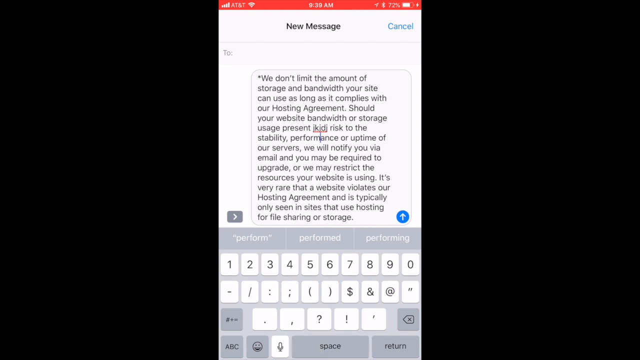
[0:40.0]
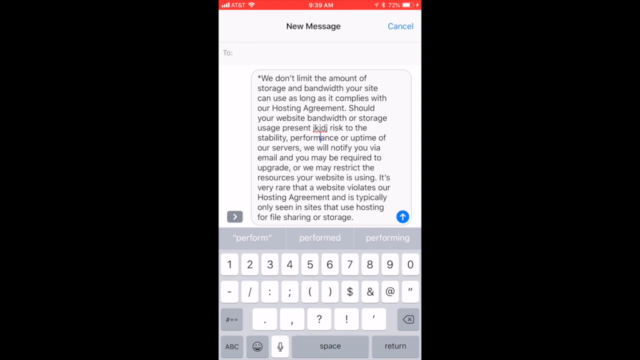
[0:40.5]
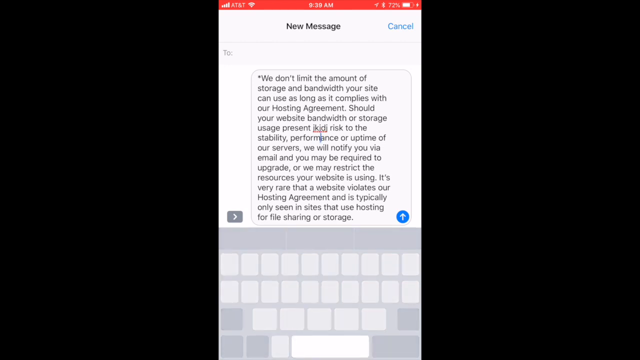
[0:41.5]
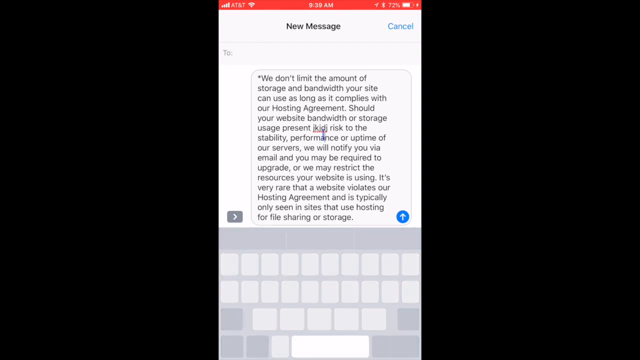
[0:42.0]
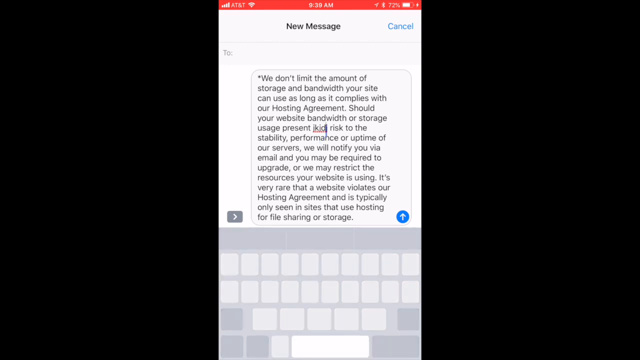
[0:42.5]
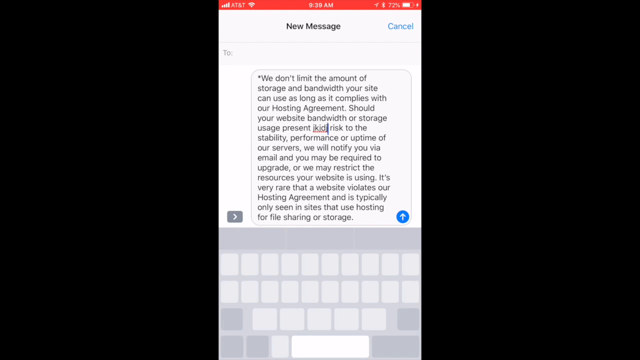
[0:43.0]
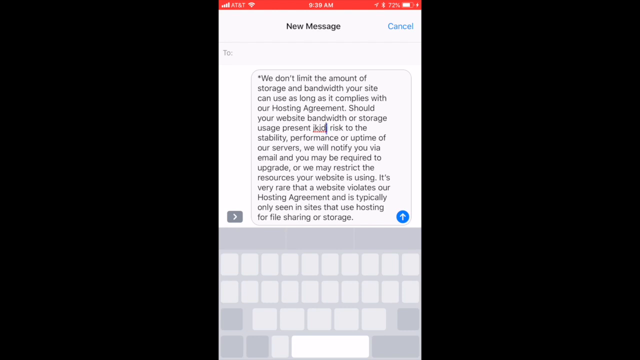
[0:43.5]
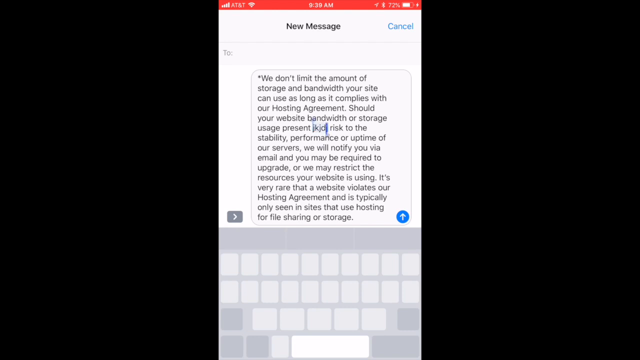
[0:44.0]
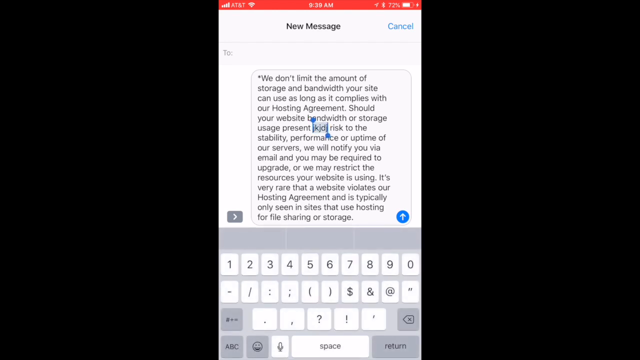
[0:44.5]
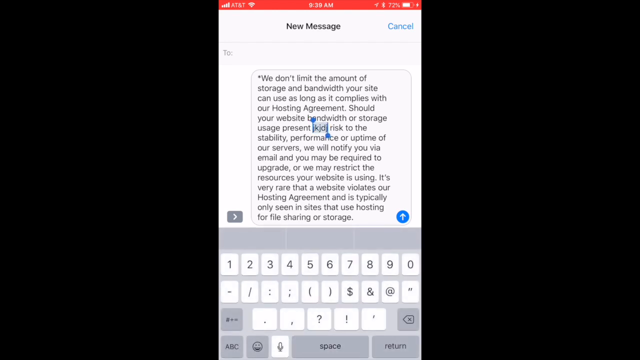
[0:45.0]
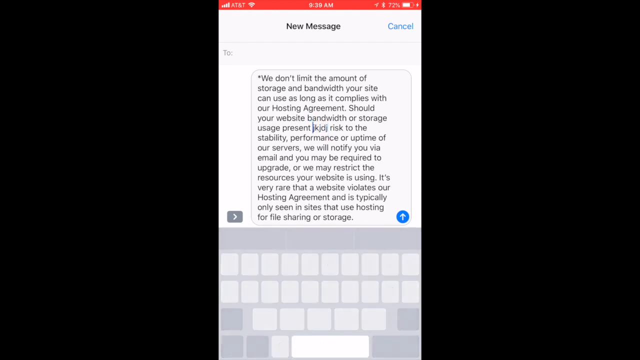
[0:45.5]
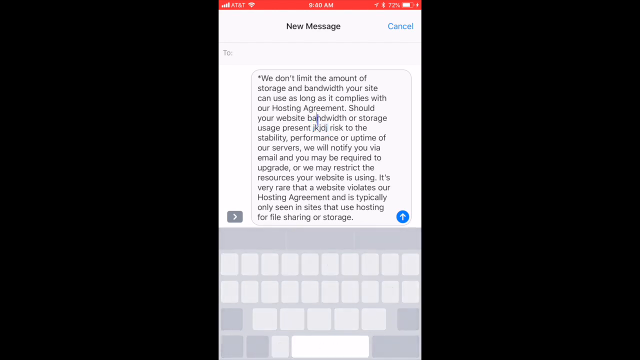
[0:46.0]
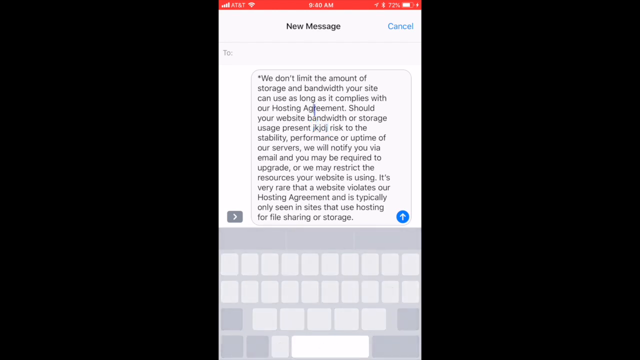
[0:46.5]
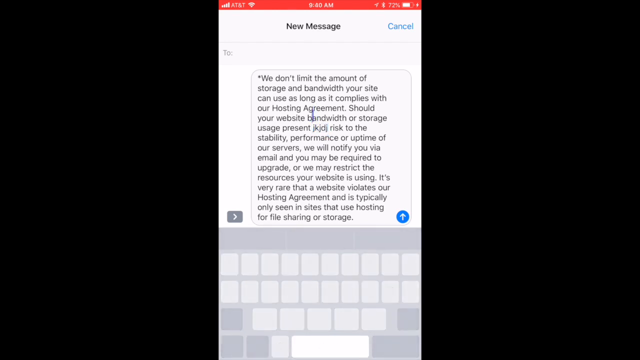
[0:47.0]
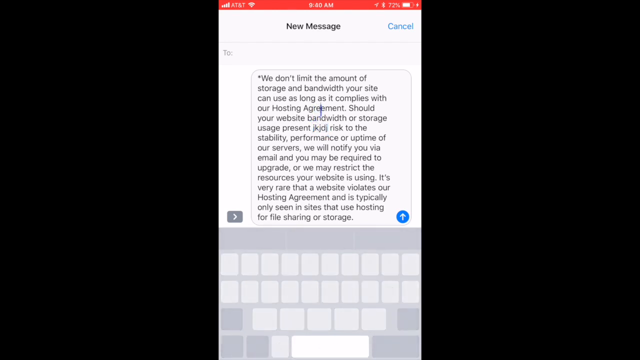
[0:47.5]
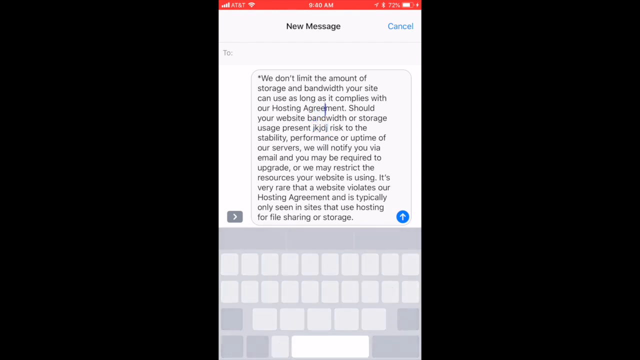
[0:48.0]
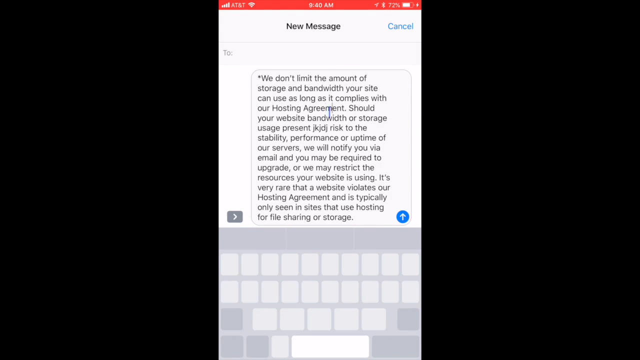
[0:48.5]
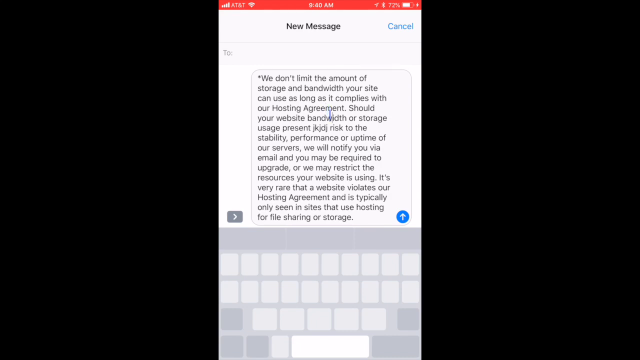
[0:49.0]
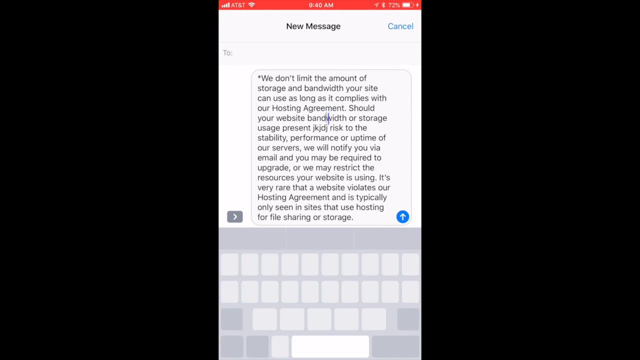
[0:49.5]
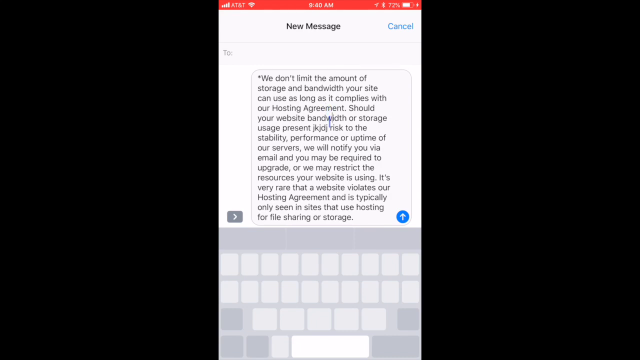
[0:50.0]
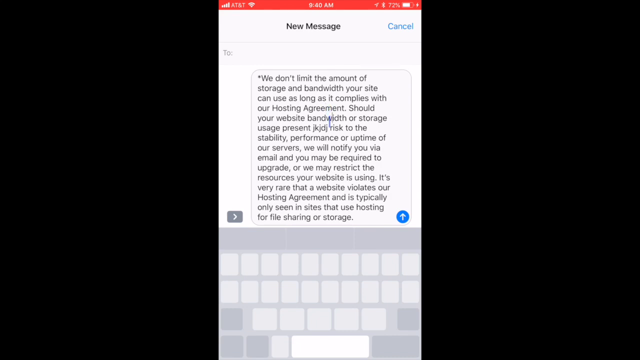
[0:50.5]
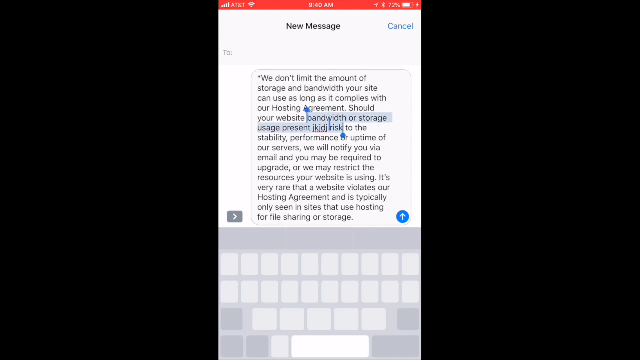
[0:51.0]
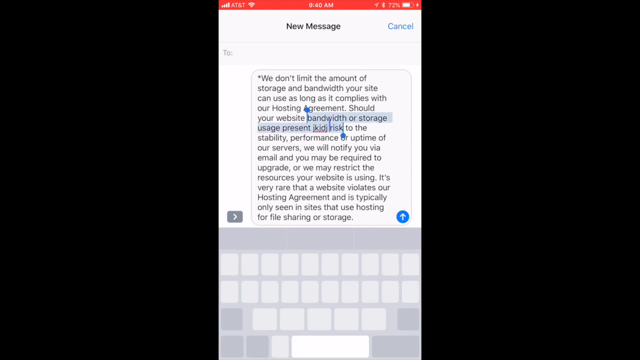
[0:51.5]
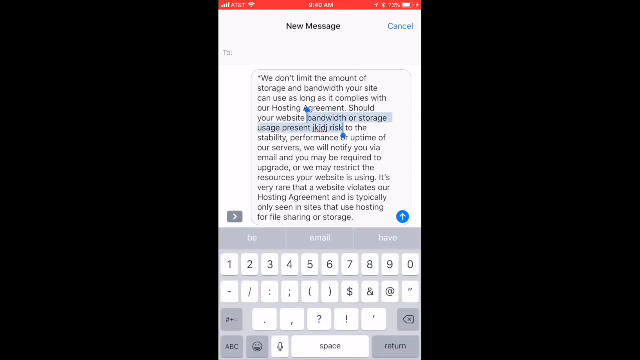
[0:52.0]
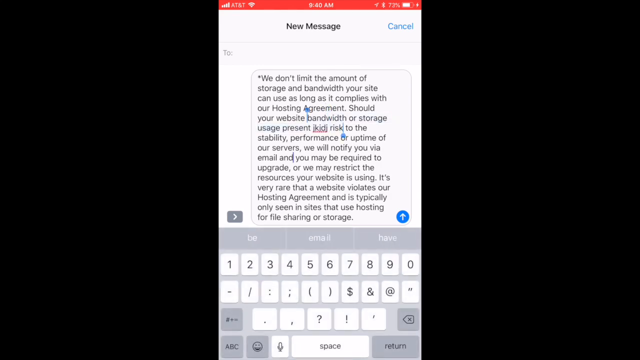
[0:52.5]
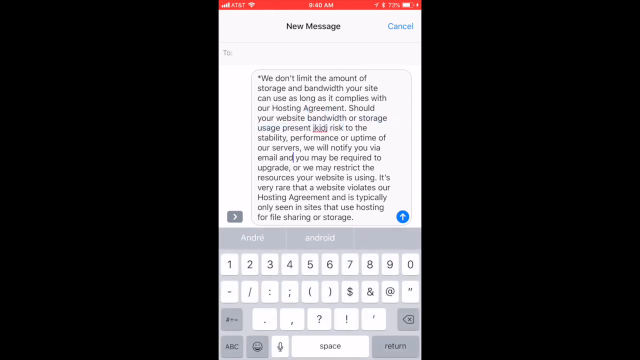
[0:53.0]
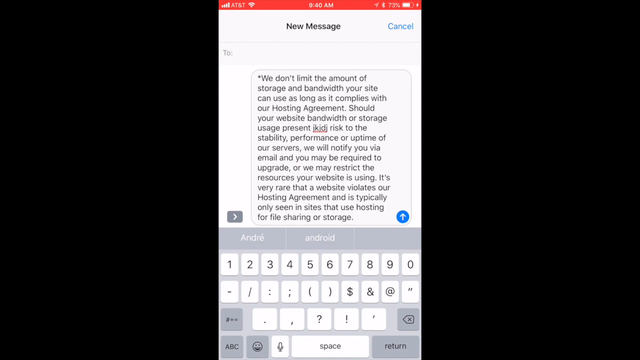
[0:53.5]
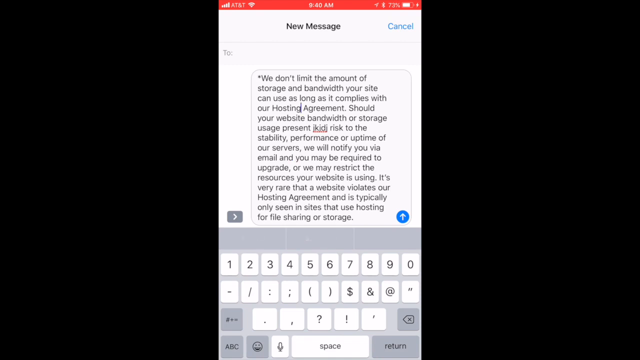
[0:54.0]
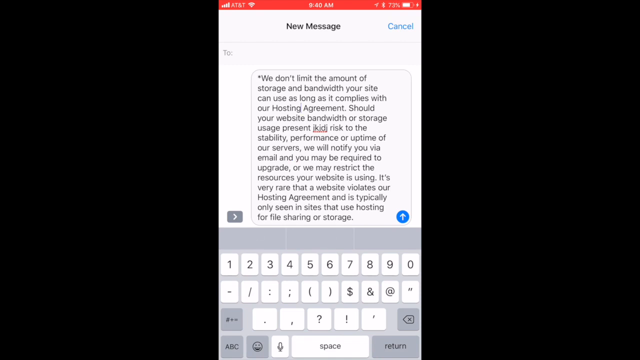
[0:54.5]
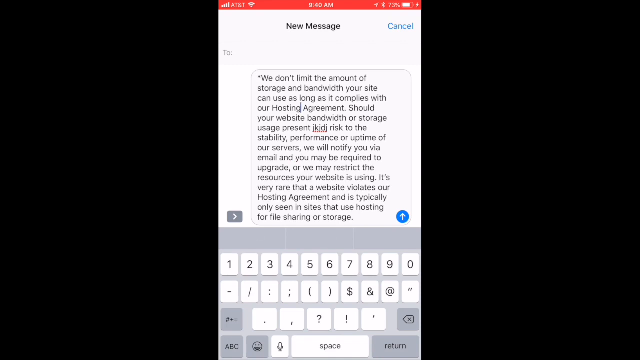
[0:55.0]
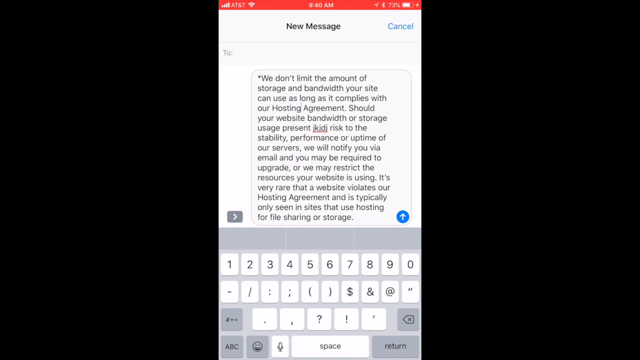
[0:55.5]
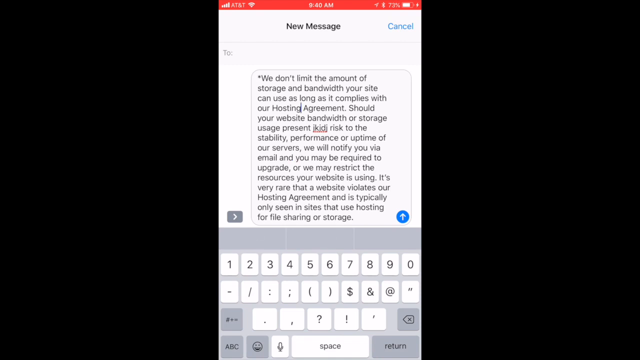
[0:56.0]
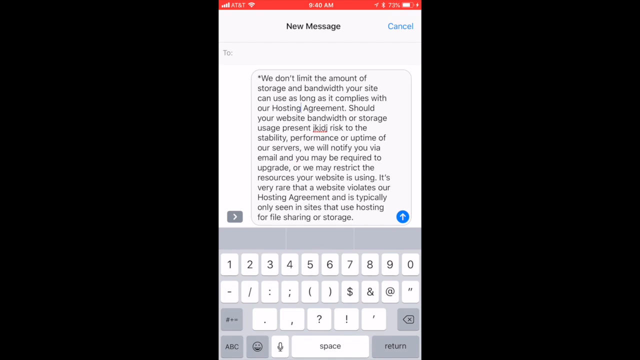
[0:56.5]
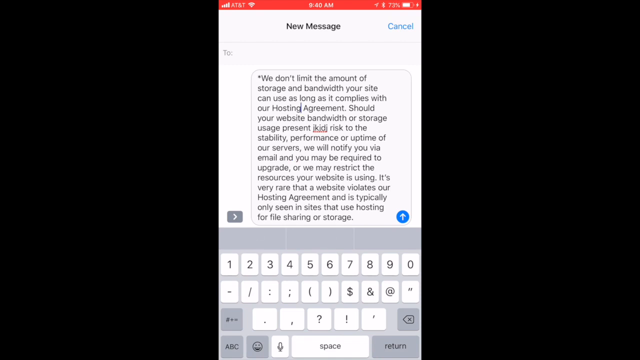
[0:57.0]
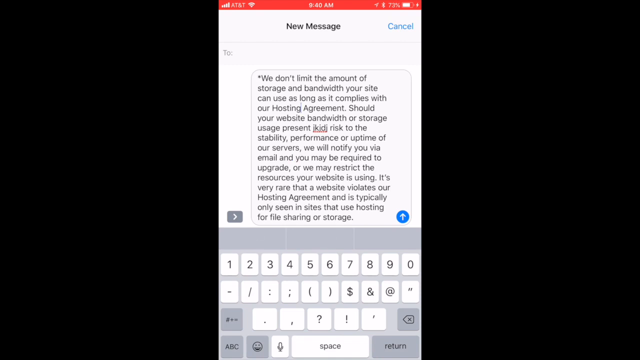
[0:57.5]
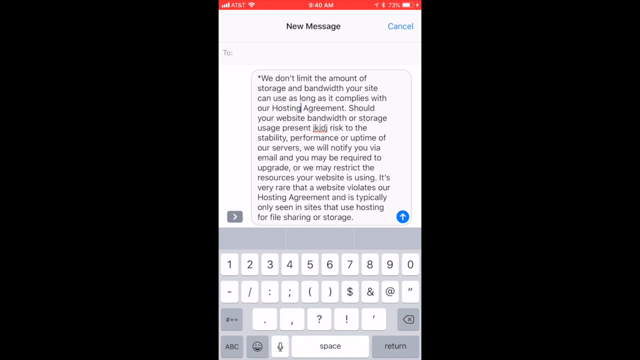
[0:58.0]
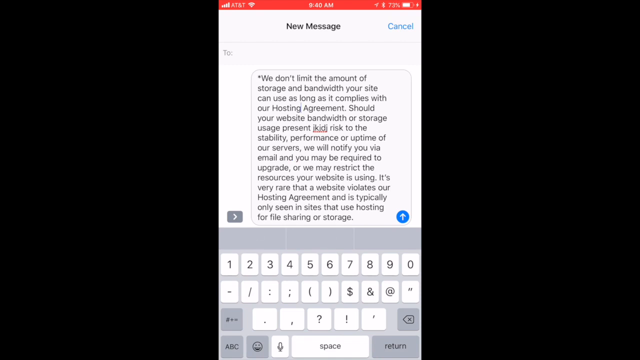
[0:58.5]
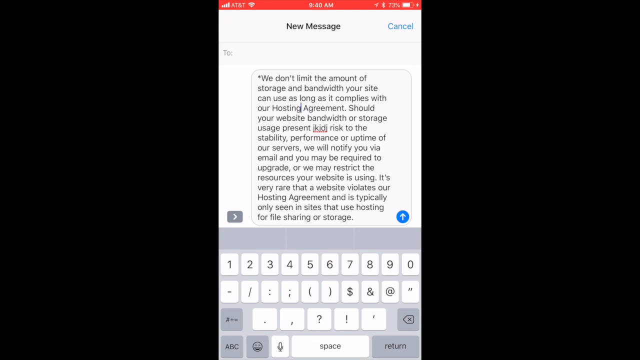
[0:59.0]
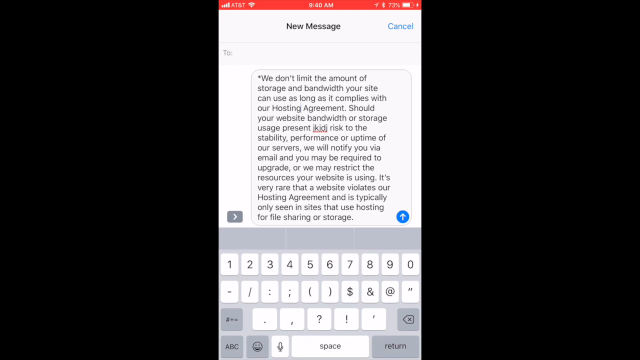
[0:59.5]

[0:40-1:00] The same message is shown, with "new message" at the top and an arrow pointing up for sending. Little seems to be edited this time. Something is happening with the mouse, but it is unclear whether it is copying or editing.